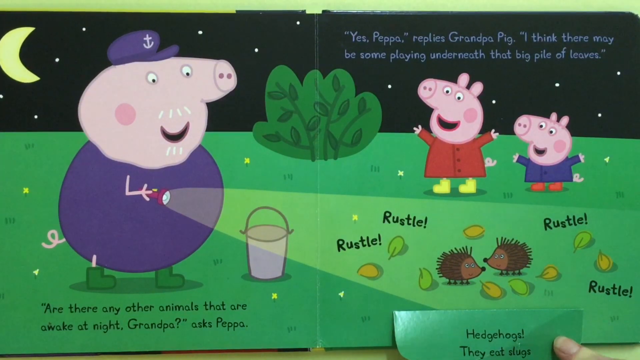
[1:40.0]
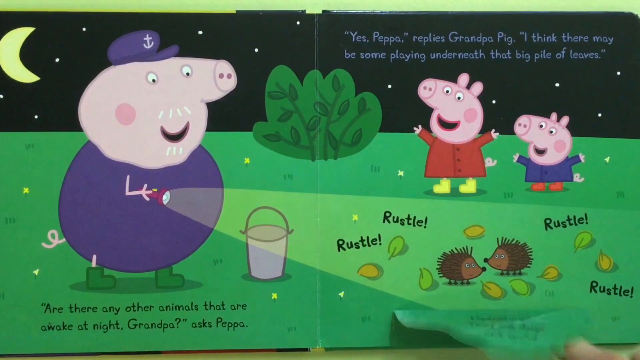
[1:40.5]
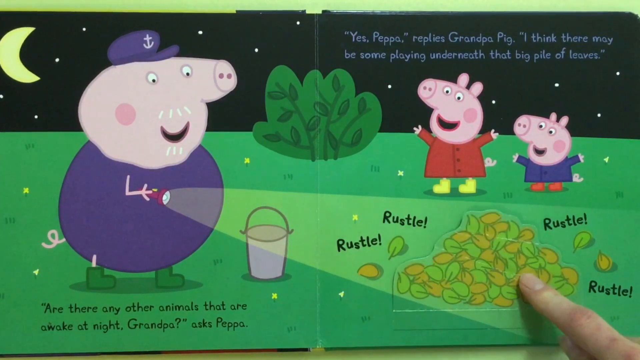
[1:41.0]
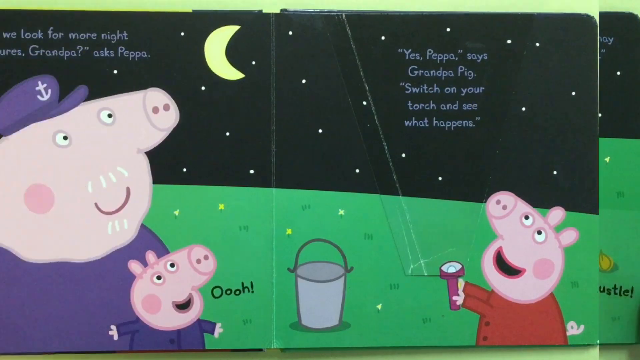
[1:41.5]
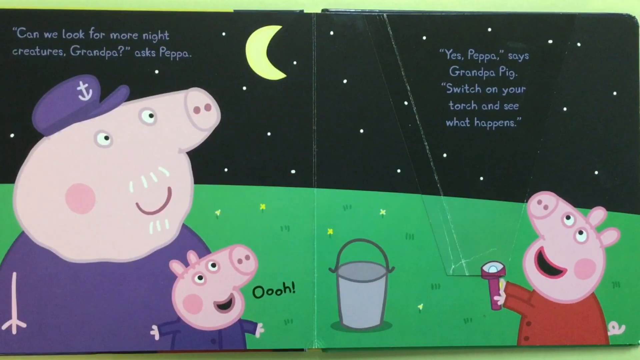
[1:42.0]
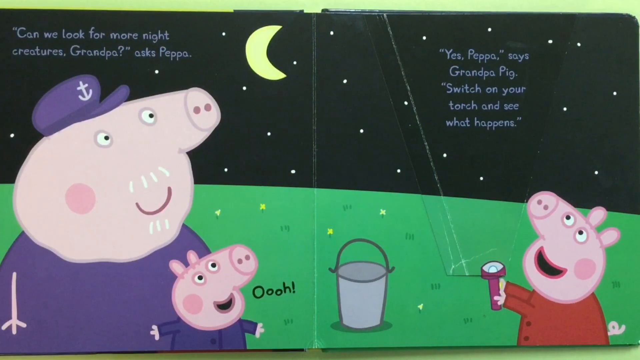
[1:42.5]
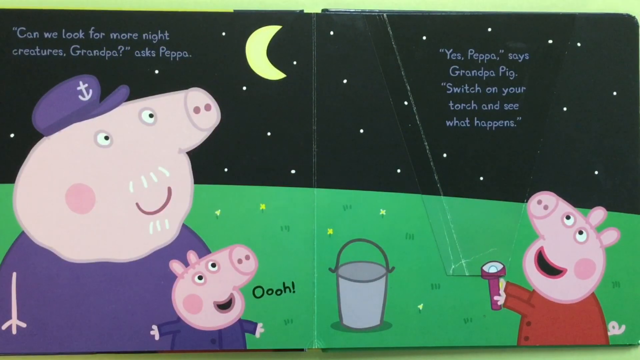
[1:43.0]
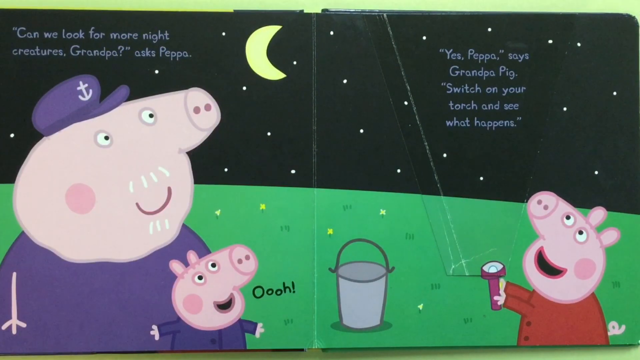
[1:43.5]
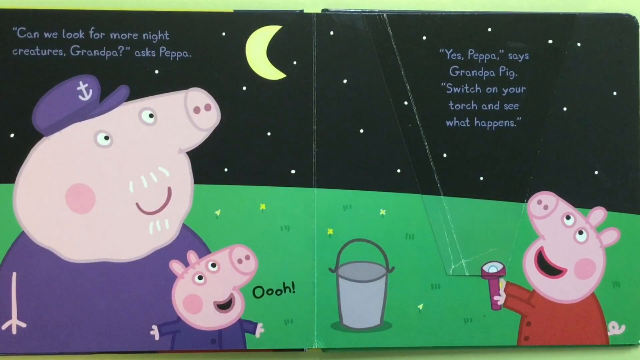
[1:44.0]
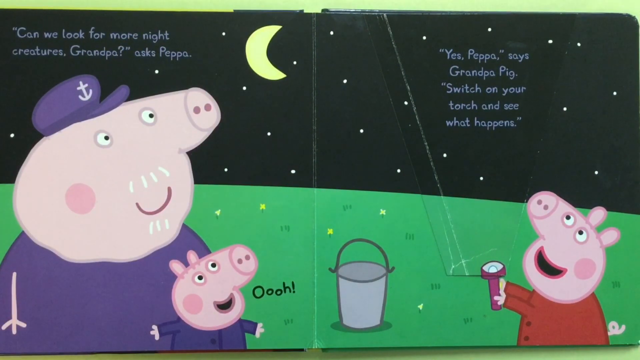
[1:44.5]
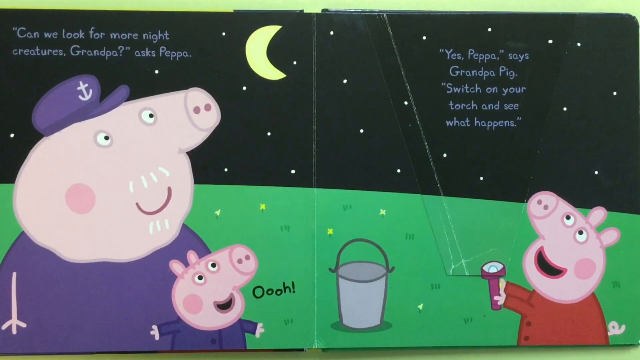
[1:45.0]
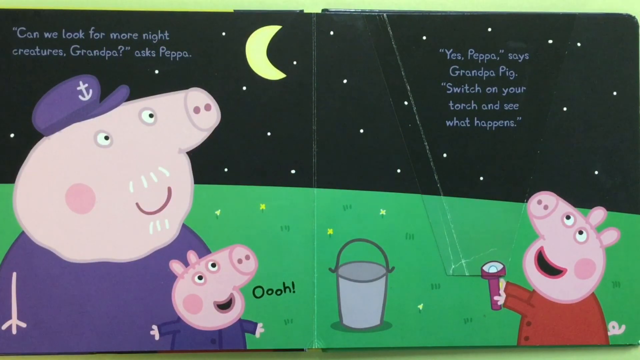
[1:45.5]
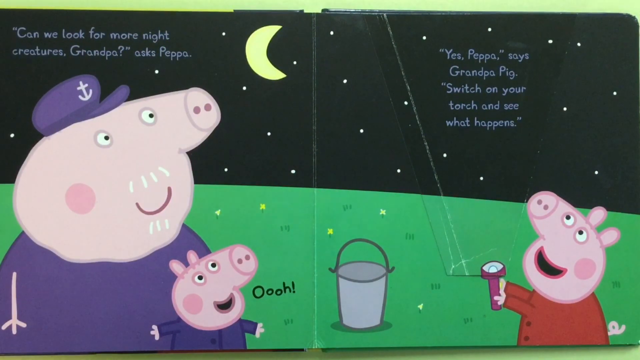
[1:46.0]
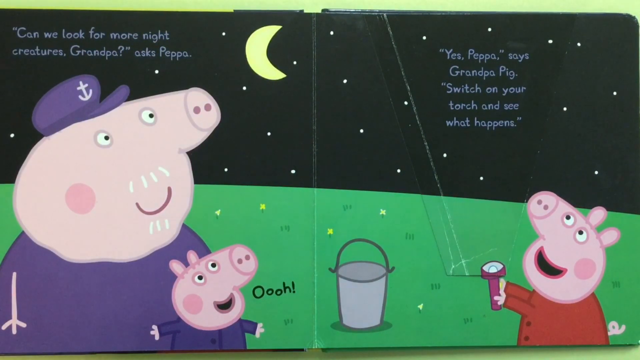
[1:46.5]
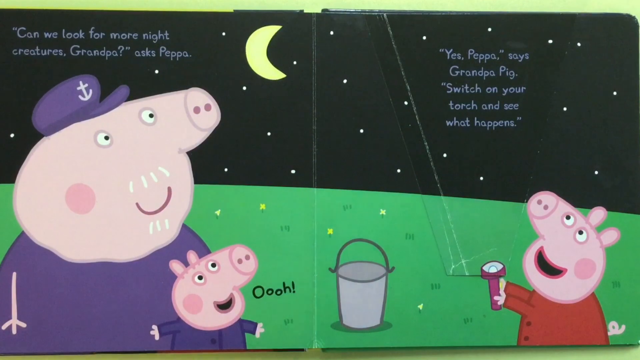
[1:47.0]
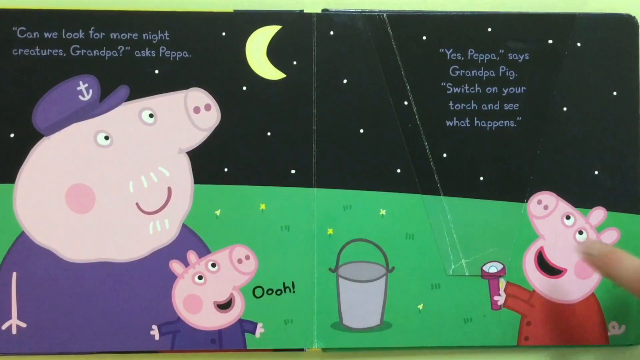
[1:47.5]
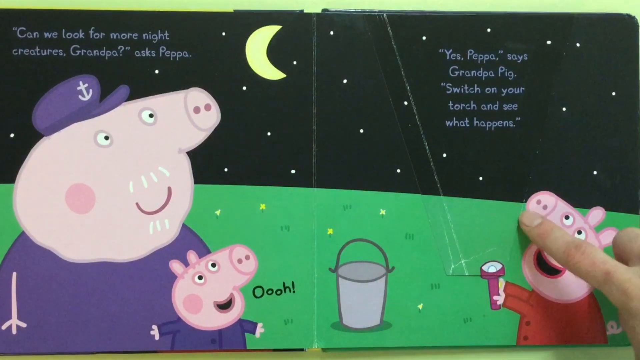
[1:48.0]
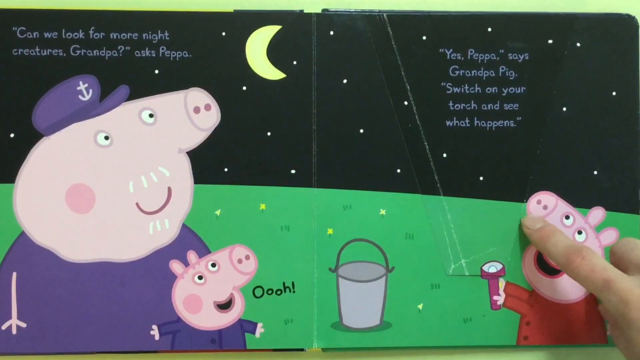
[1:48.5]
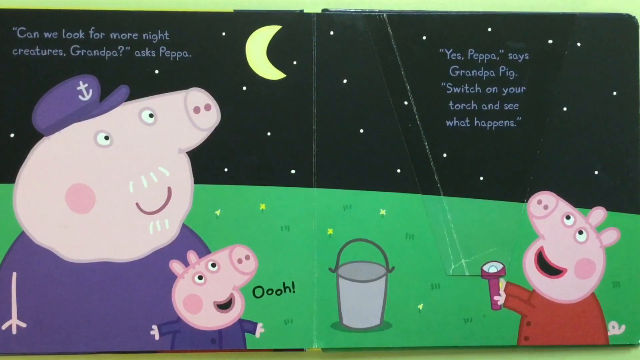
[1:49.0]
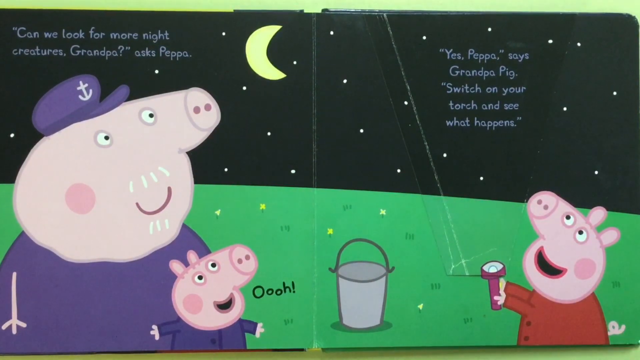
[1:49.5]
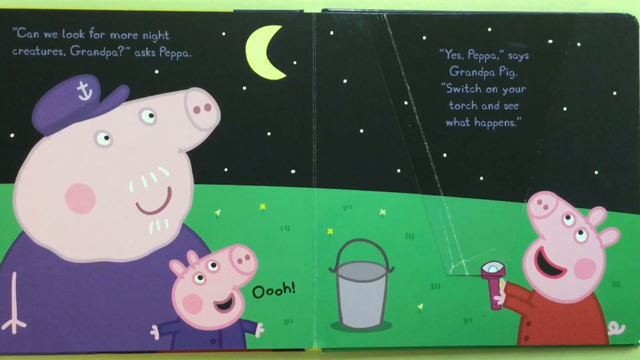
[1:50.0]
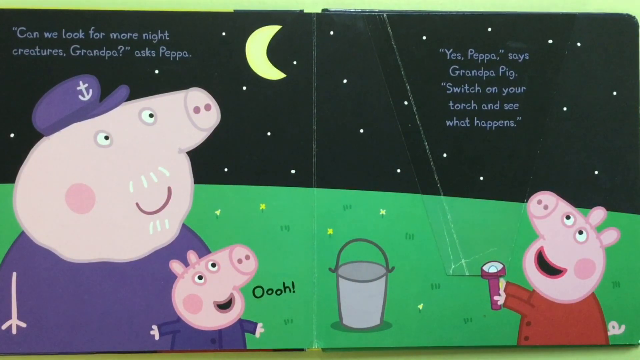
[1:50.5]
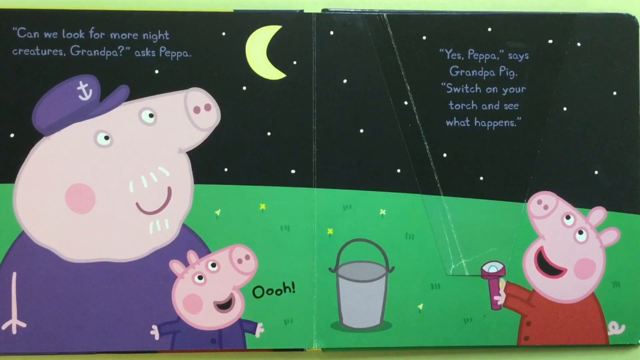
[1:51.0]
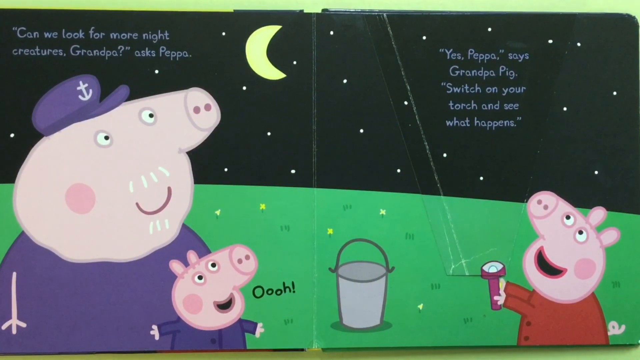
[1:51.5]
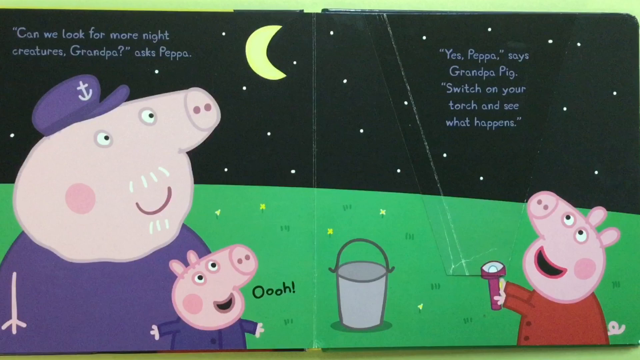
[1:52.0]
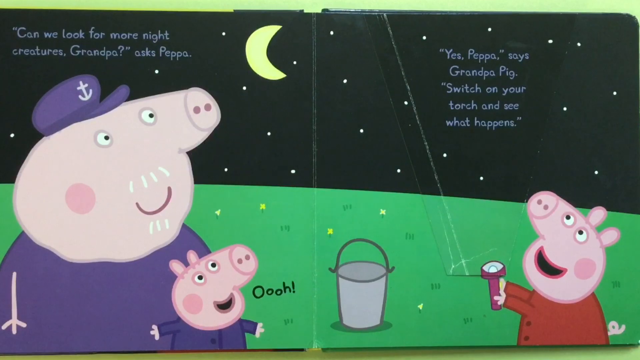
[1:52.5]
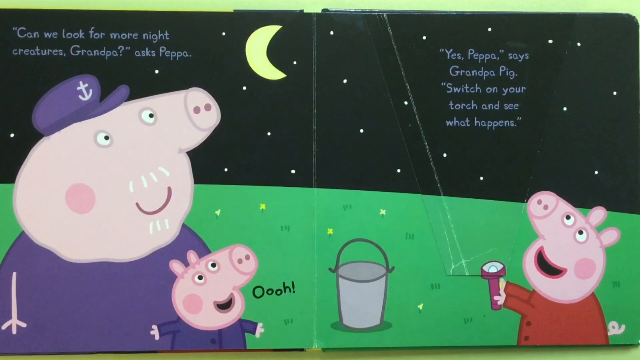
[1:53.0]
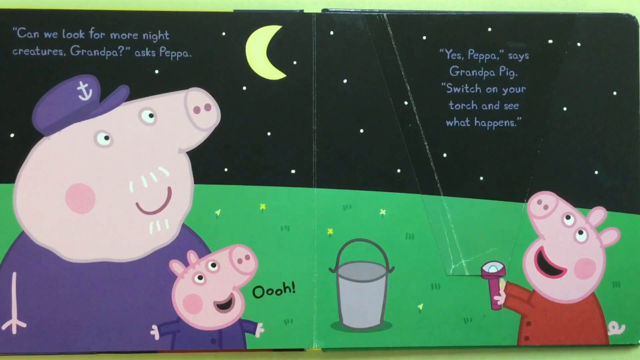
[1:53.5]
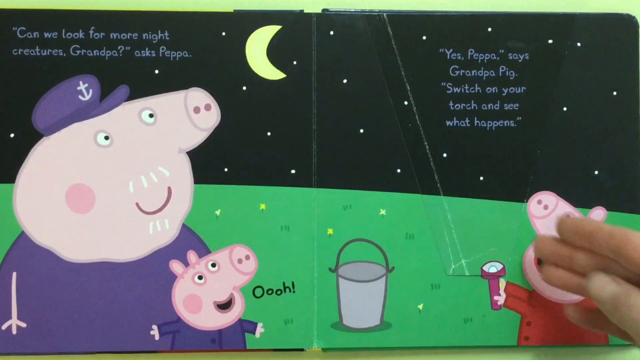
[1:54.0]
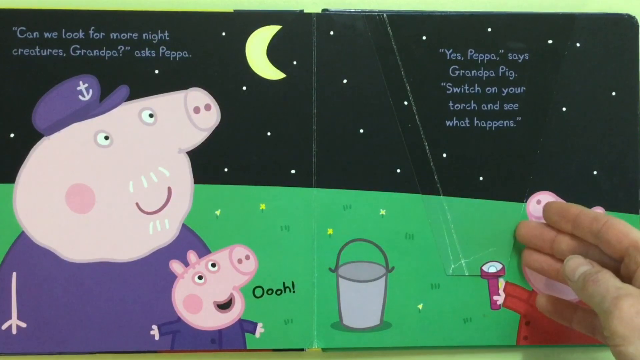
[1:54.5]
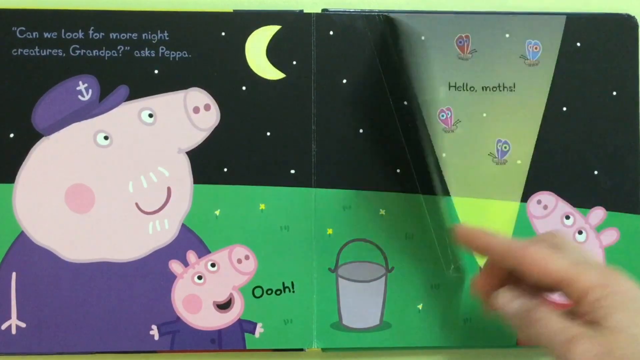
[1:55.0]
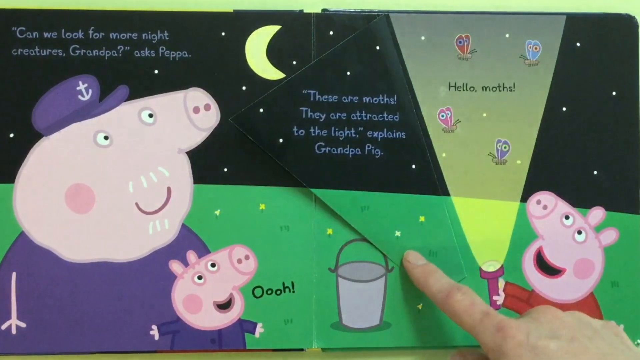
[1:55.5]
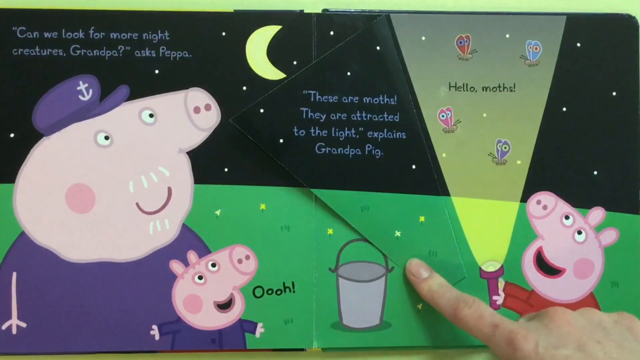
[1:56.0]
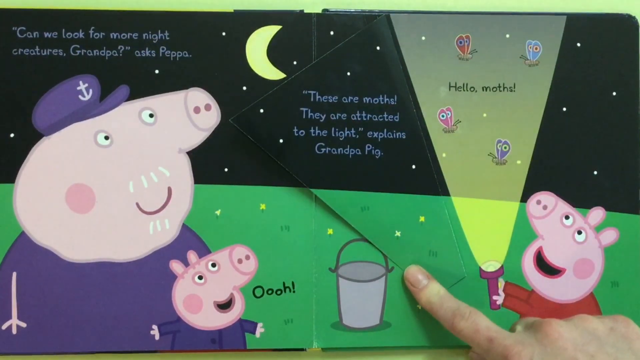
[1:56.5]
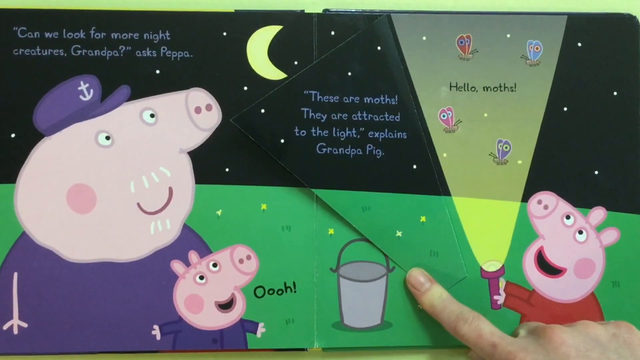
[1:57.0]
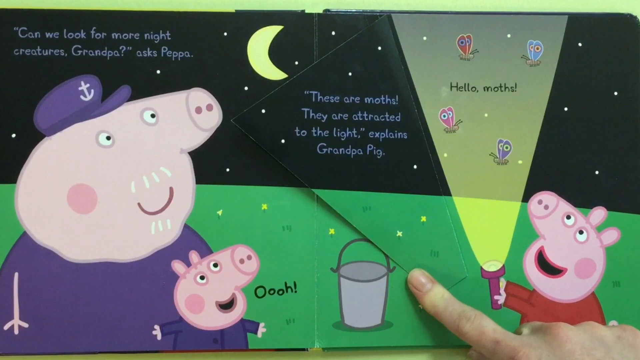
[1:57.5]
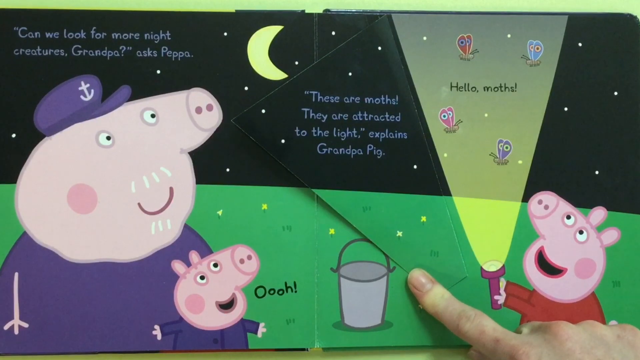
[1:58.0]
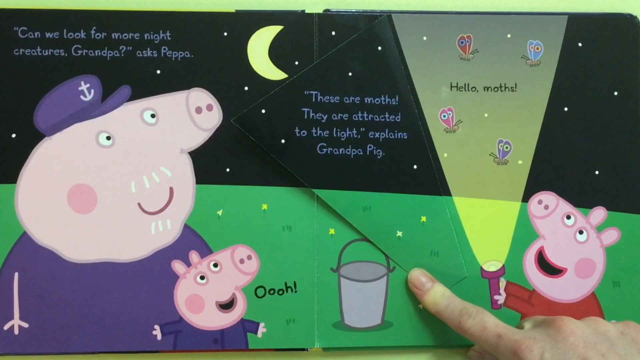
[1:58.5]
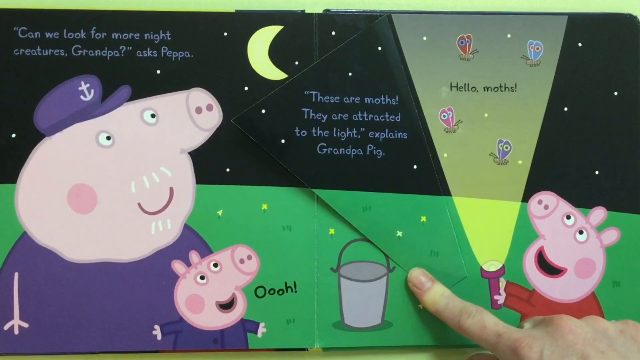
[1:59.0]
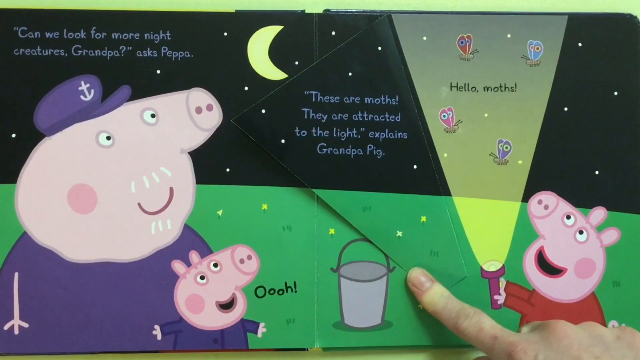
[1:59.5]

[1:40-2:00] A page of the Peppa Pig book Night Creatures is turned, showing the text: "can we look for more night creatures, Grandpa asked Peppa." A flap is turned, revealing: "these are moths. They are attracted to the light, explains Grandpa Pig." At night, Peppa Pig holds a flashlight up in the air and sees moths of different colors. There is a moon, and stars are visible. Grandpa Pig wears a purple sailor hat and purple uniform, and the little brother pig wears a purple suit; they look up into the night sky. A silver bucket is in the middle.